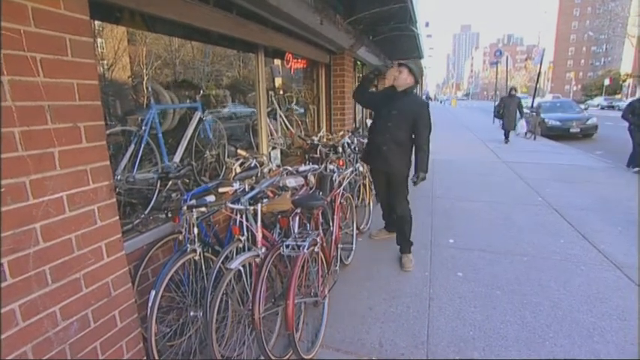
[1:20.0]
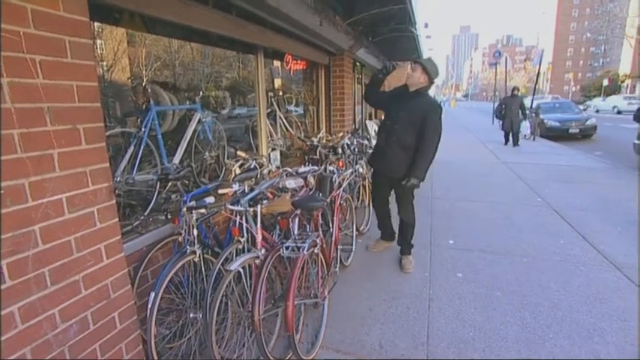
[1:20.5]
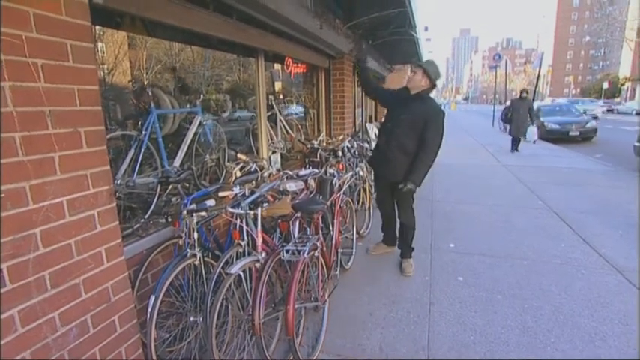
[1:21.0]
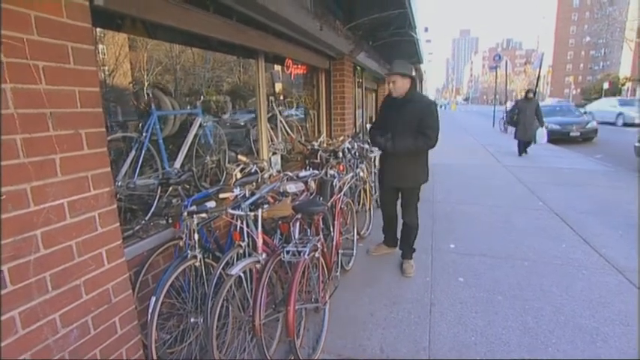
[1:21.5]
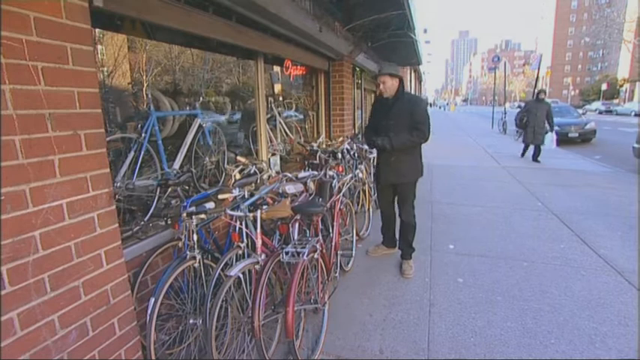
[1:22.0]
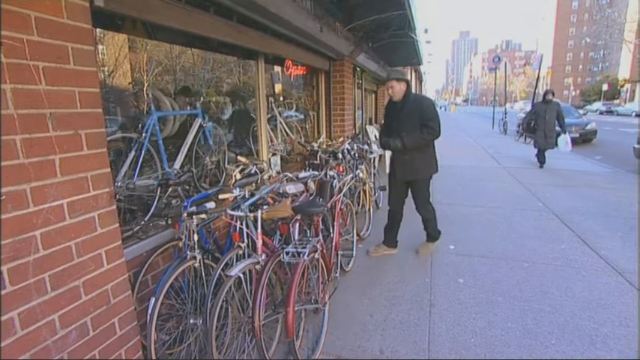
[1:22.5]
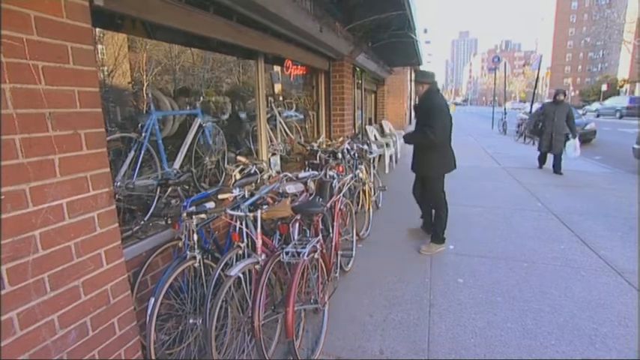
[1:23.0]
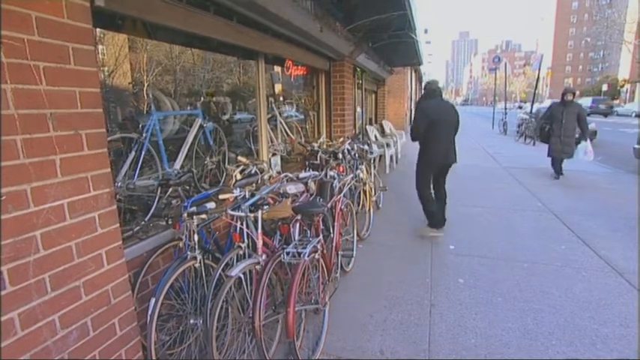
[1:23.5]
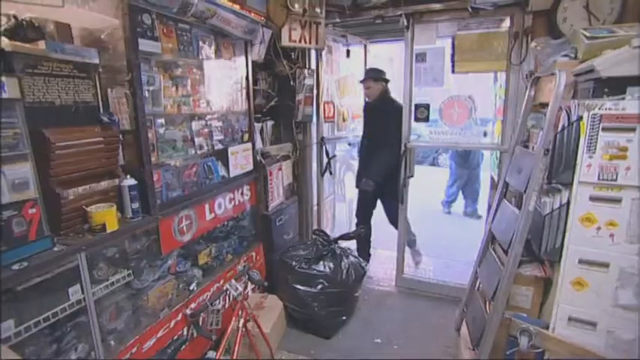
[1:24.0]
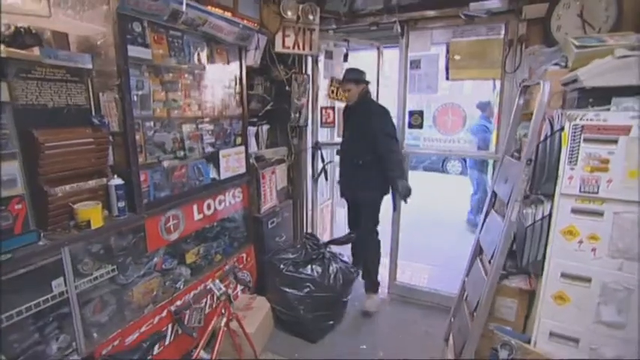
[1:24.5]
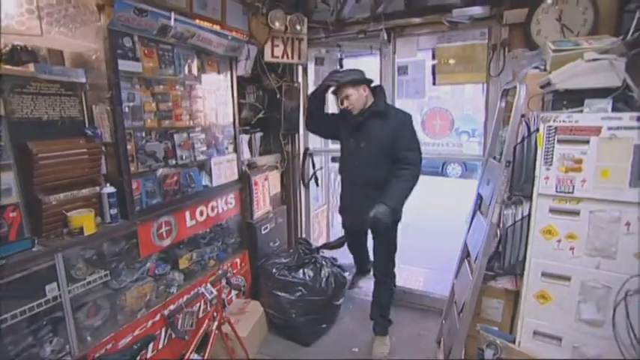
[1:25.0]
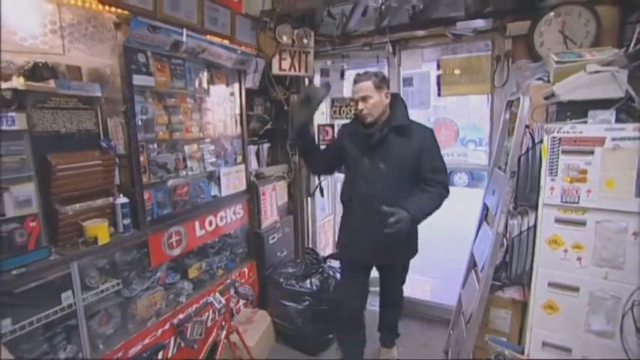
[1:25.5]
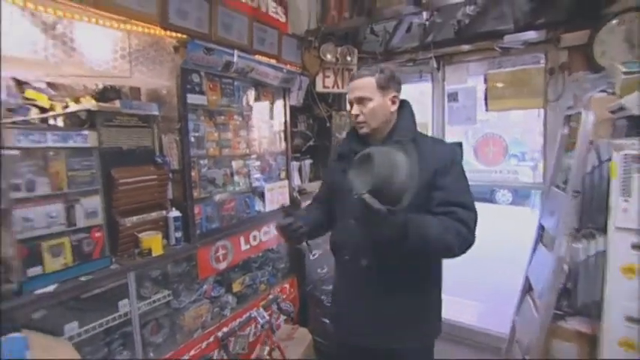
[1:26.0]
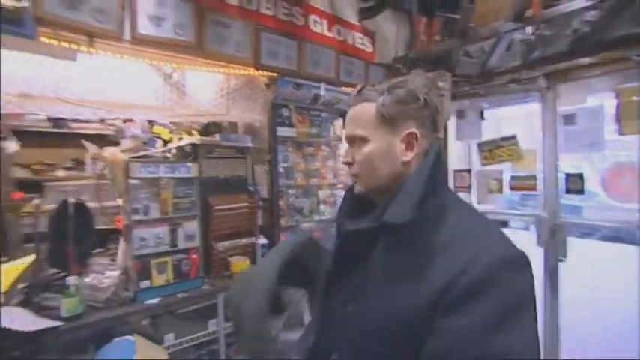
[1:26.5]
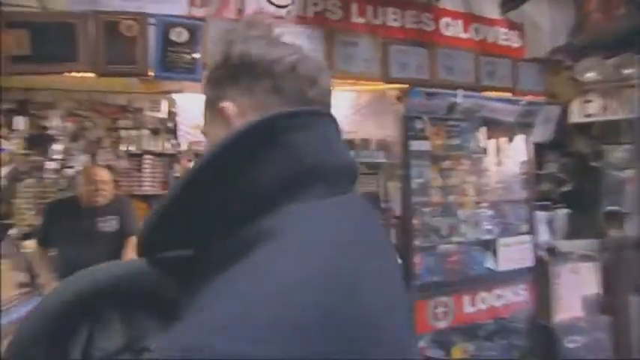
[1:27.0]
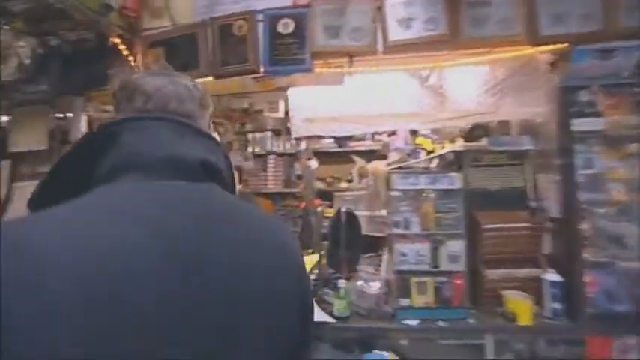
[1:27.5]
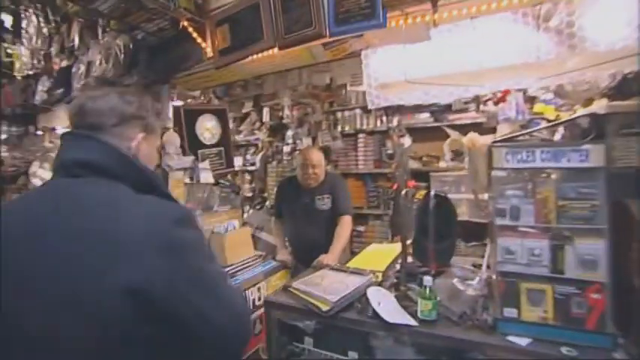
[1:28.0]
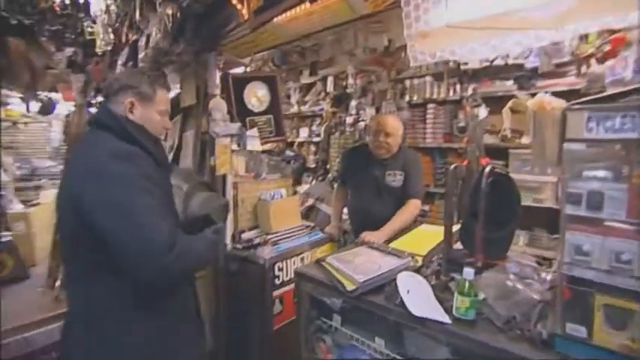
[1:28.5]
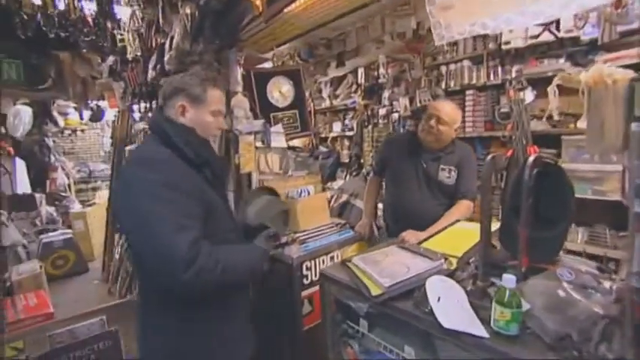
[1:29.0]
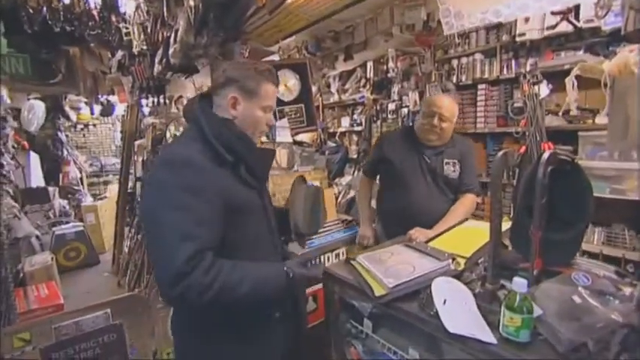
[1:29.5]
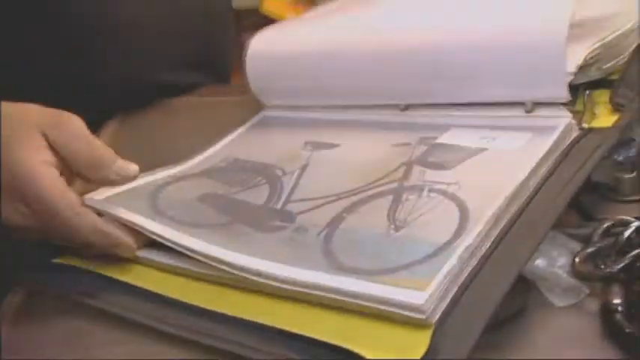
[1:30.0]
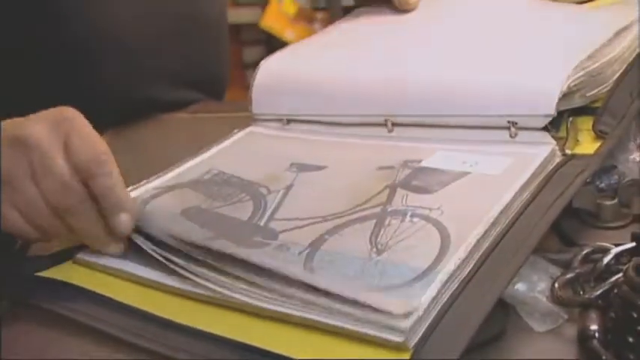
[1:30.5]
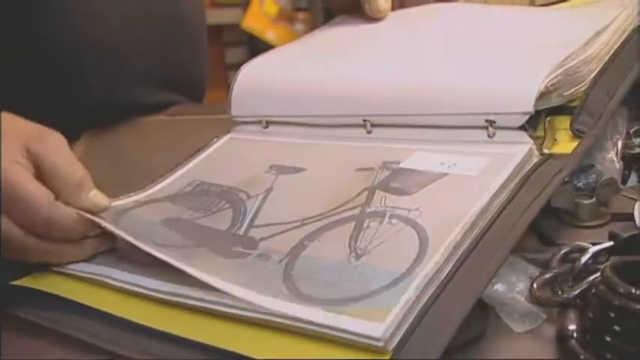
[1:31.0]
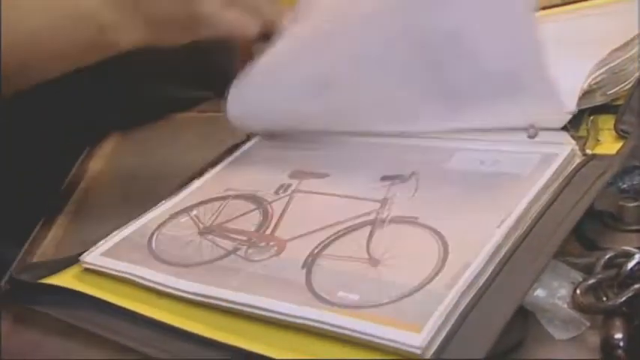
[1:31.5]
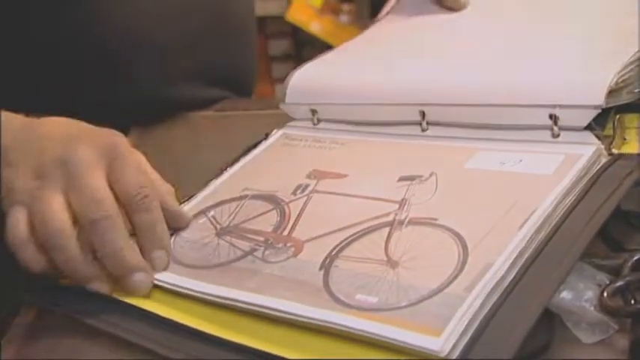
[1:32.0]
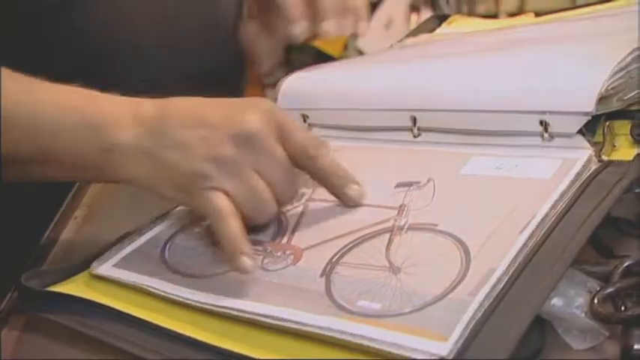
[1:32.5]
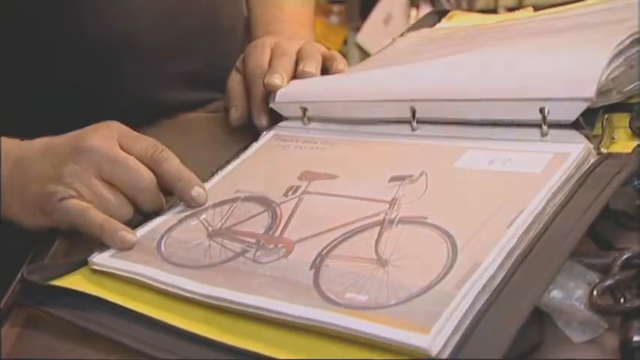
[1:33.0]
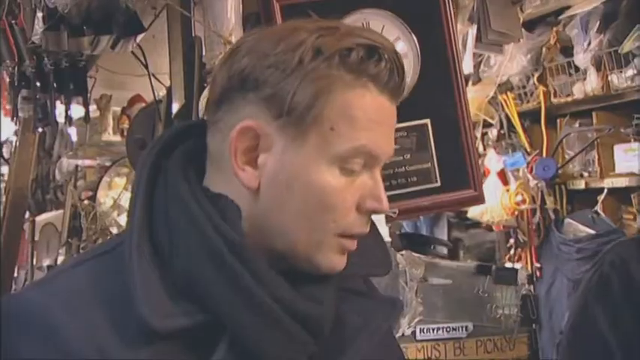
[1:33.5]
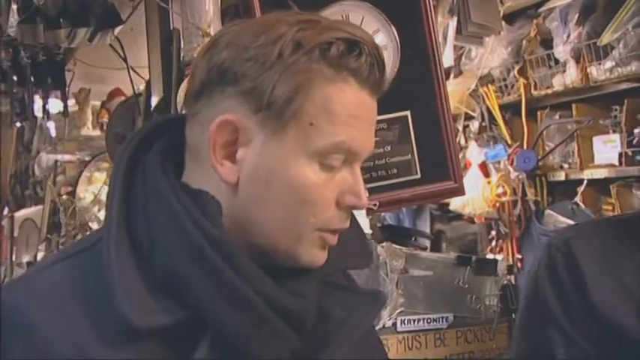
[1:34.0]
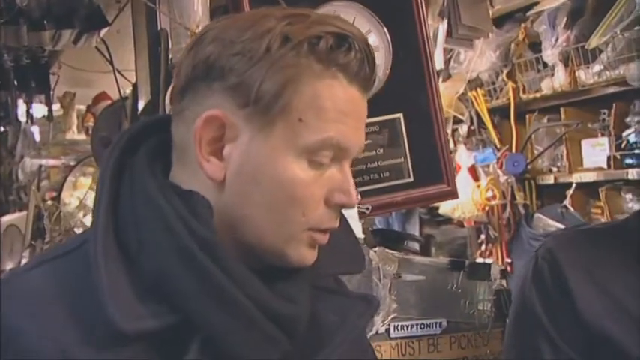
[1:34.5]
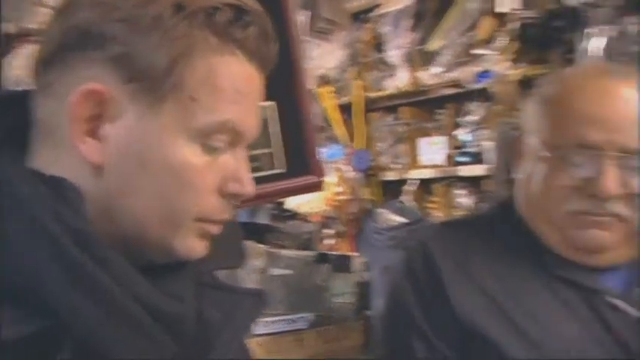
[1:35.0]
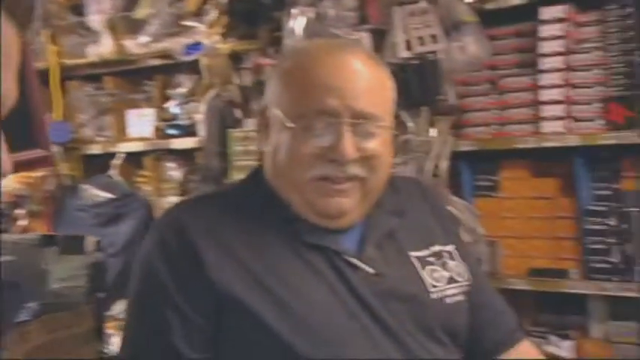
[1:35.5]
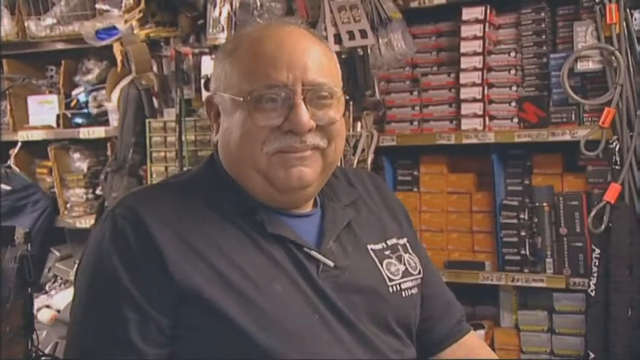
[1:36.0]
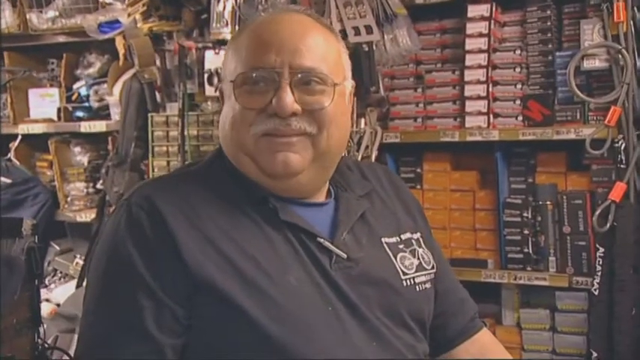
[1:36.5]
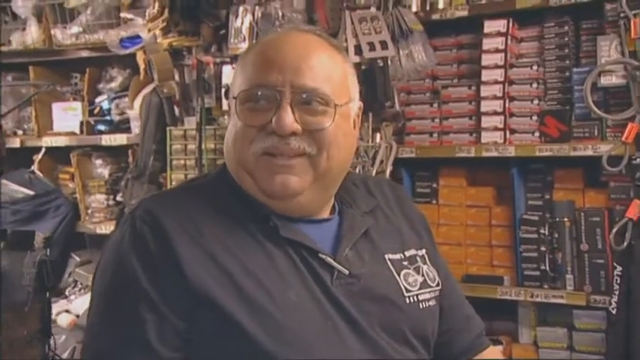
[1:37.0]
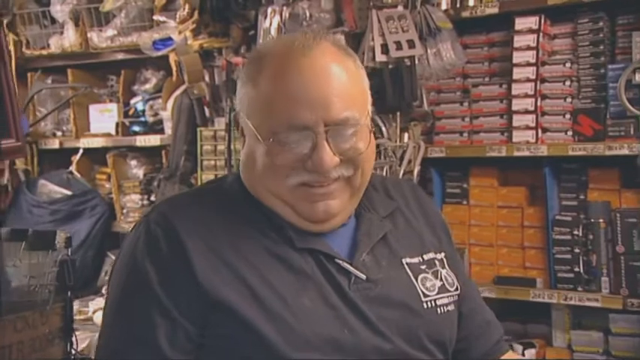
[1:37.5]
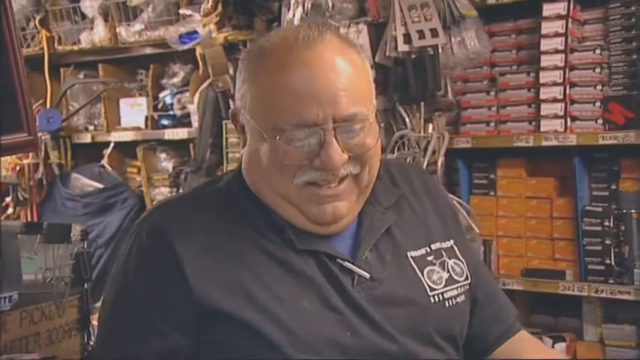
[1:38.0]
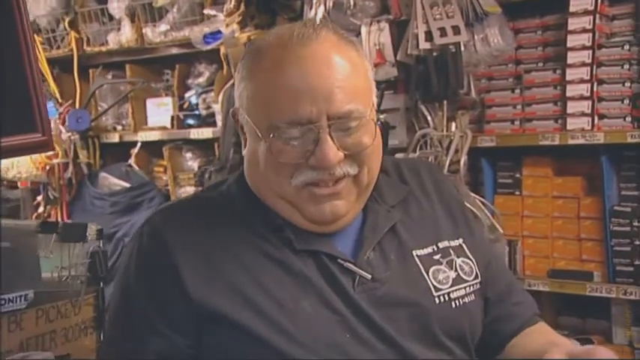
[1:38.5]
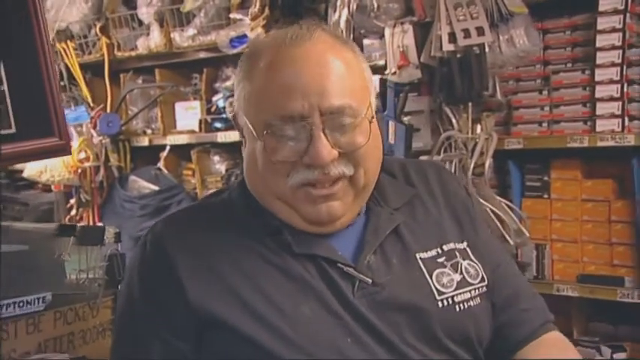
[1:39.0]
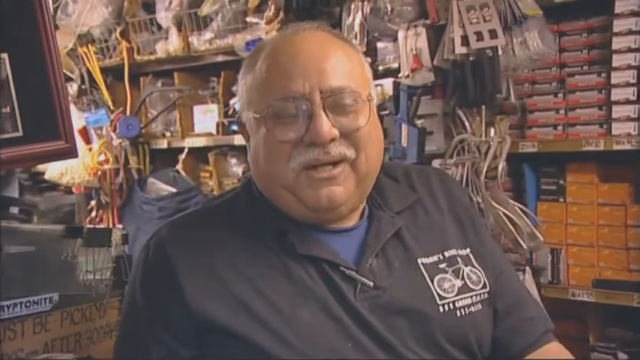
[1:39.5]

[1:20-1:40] The man stands outside Frank's Bike Shop wearing a black coat, black gloves, black pants, light shoes and a black hat. He stands right next to a rack of bicycles, five deep, that line the walls and windows of the shop, and looks over his options. He heads inside, takes off his hat, walks up to the counter and greets the proprietor, who greets him back. They look through a catalog of available bicycles. The man points to a red one, and the proprietor smiles.